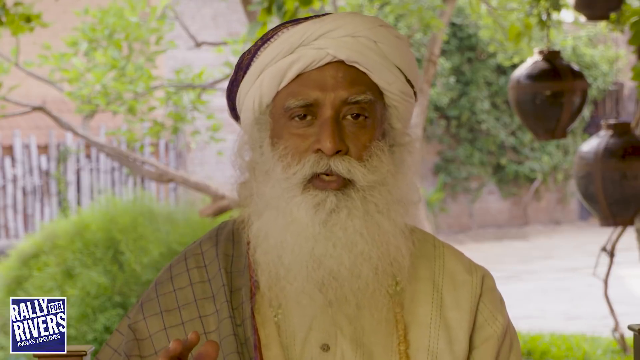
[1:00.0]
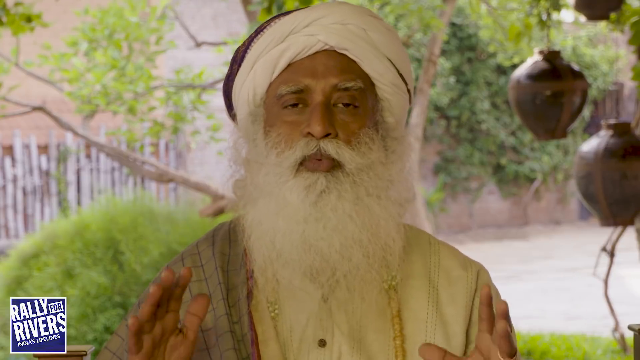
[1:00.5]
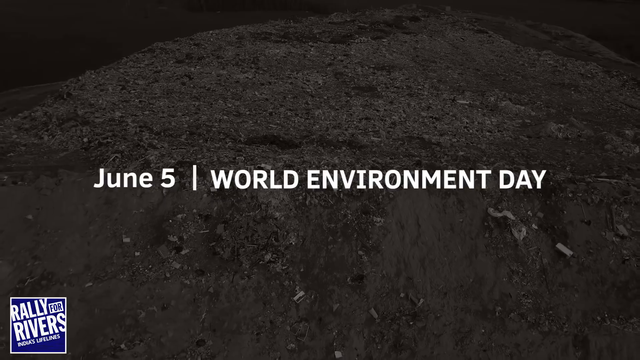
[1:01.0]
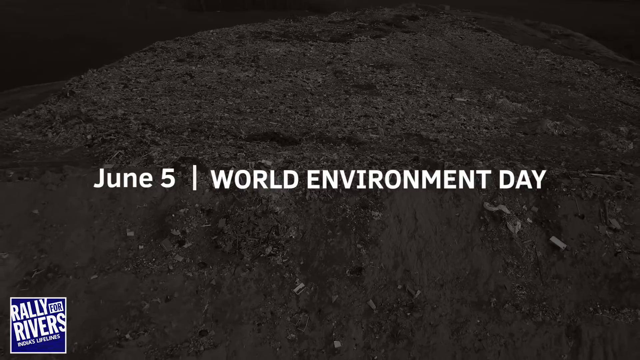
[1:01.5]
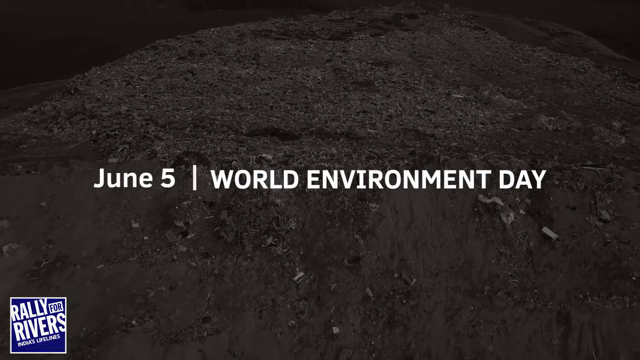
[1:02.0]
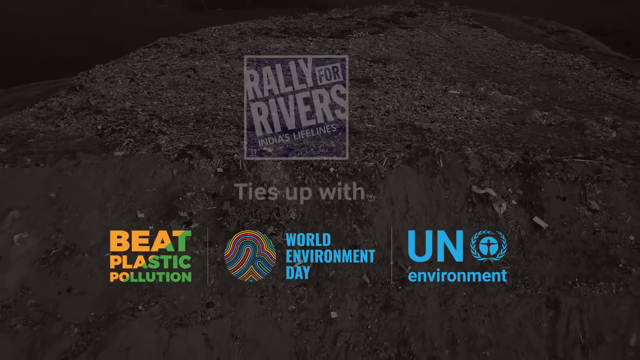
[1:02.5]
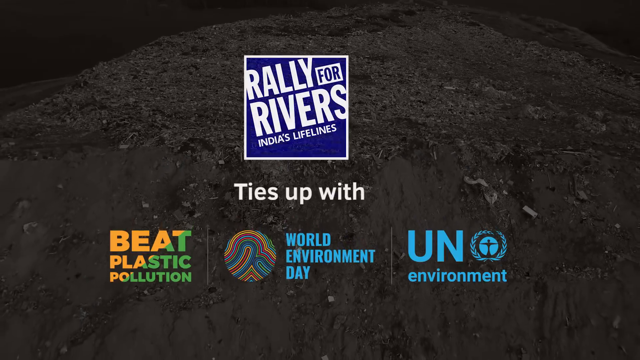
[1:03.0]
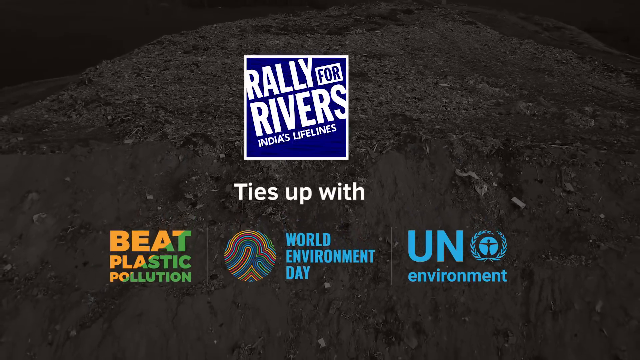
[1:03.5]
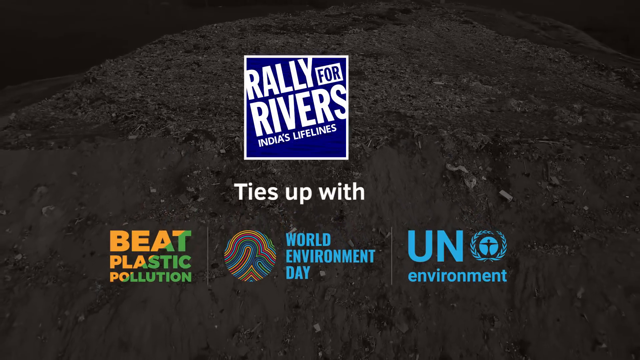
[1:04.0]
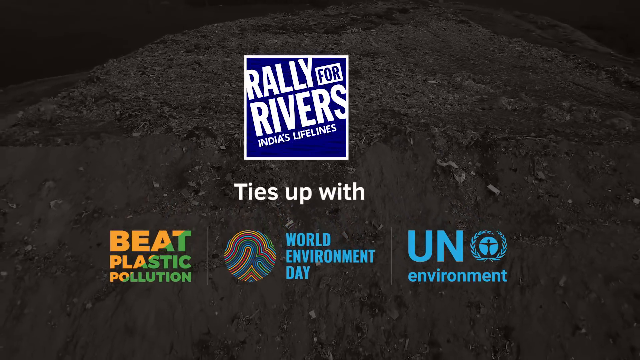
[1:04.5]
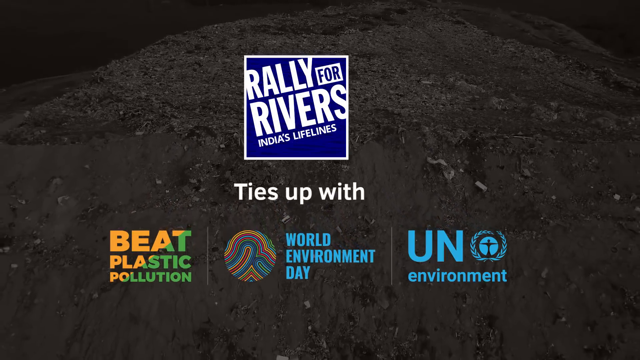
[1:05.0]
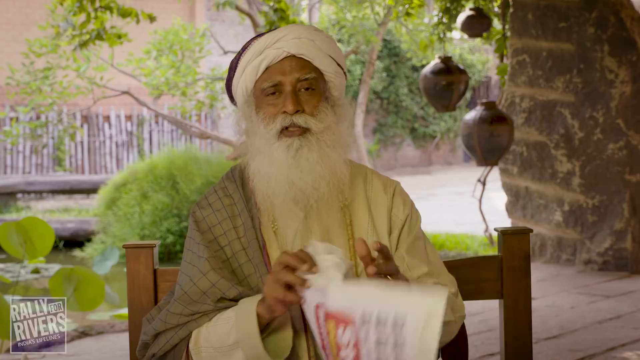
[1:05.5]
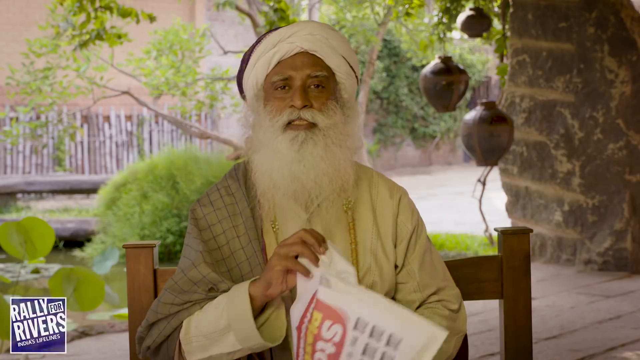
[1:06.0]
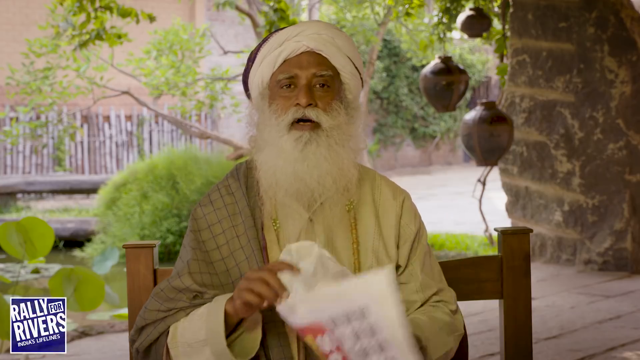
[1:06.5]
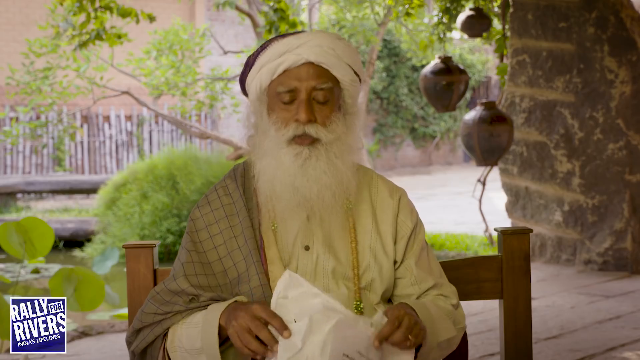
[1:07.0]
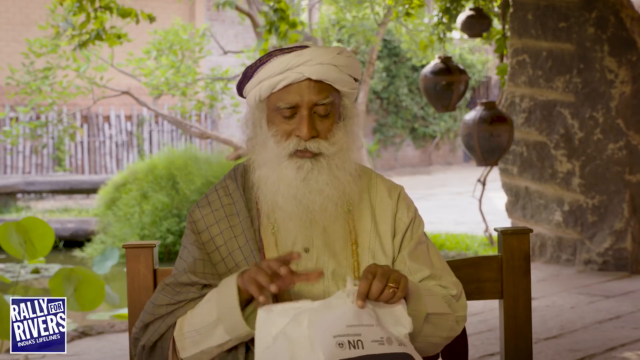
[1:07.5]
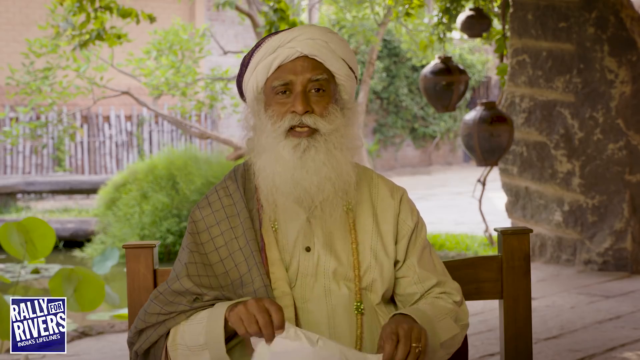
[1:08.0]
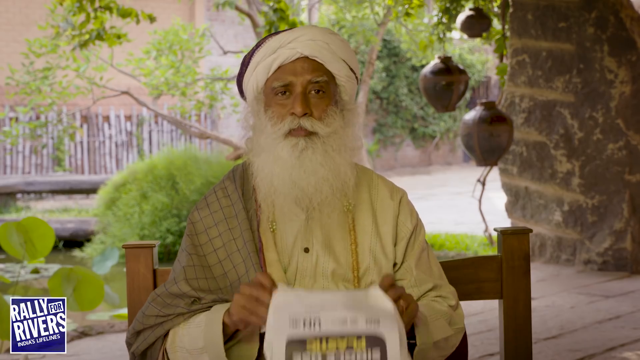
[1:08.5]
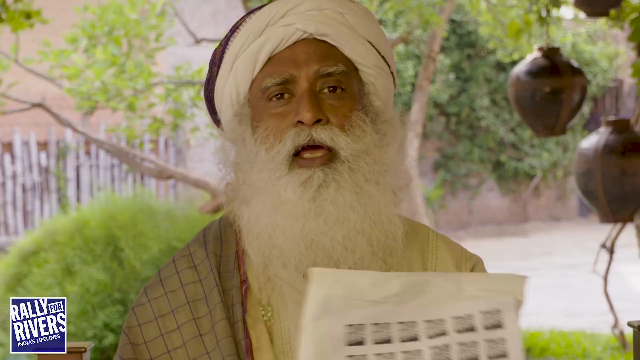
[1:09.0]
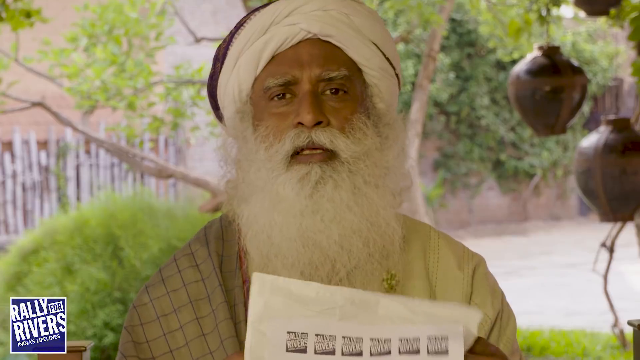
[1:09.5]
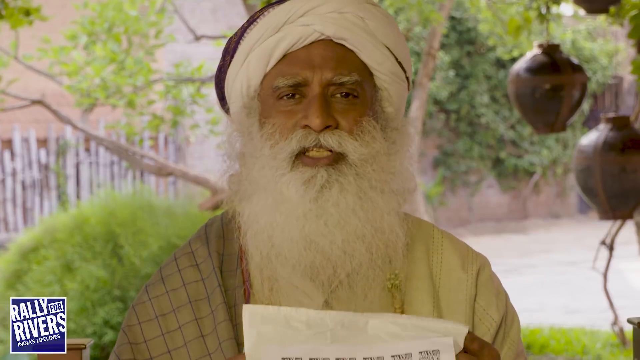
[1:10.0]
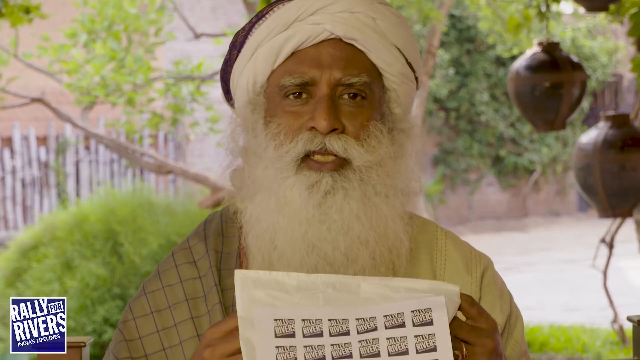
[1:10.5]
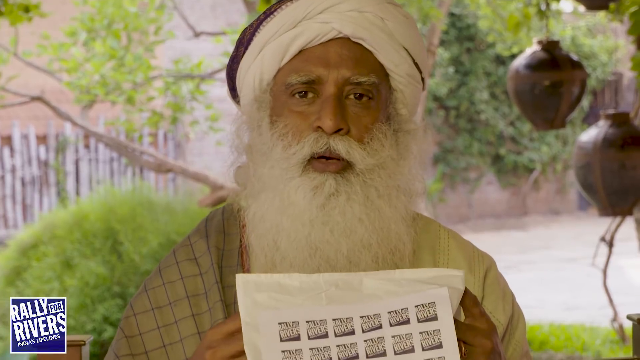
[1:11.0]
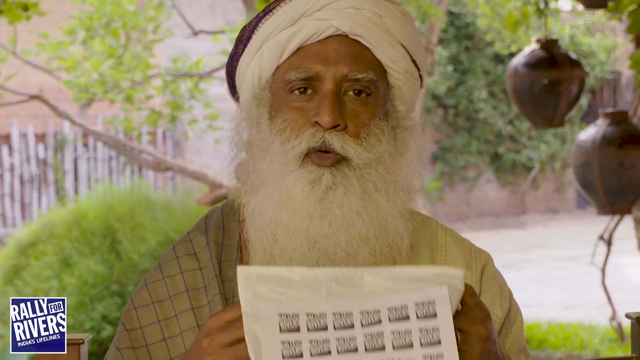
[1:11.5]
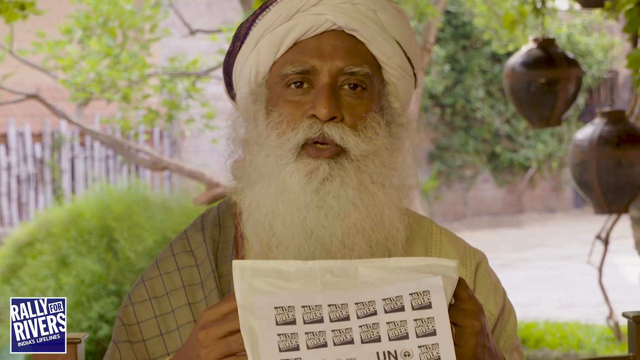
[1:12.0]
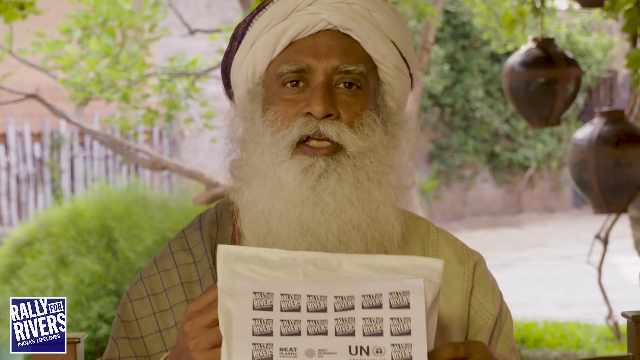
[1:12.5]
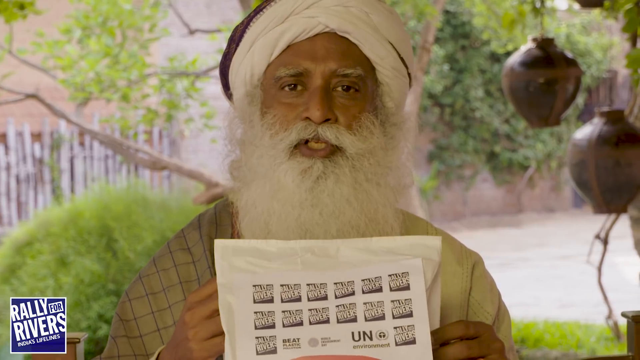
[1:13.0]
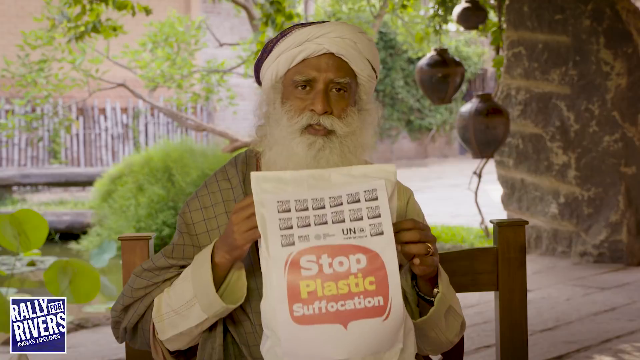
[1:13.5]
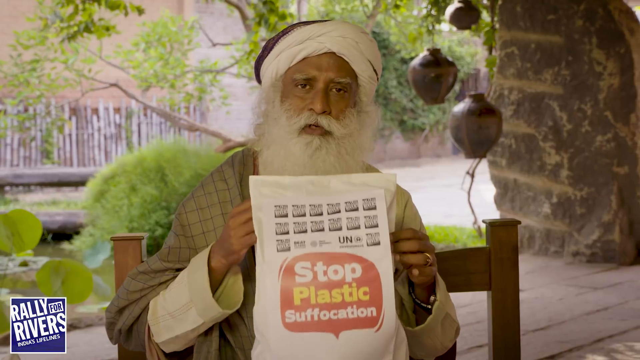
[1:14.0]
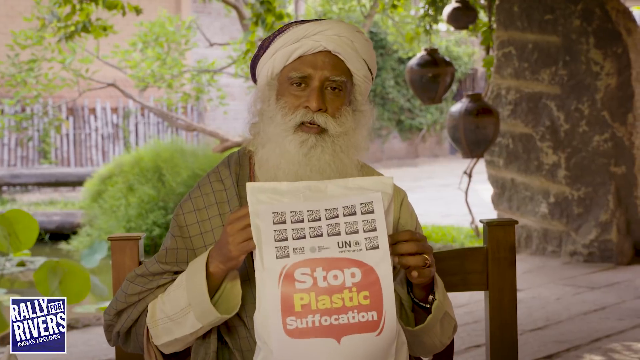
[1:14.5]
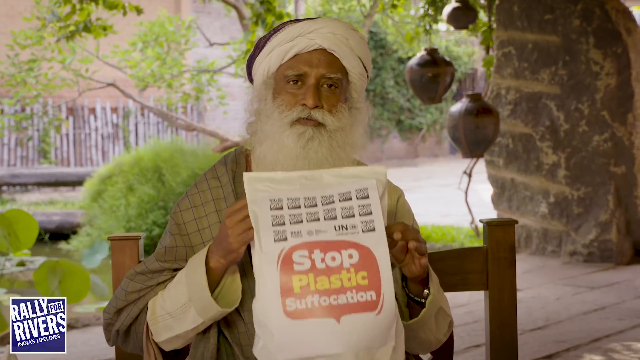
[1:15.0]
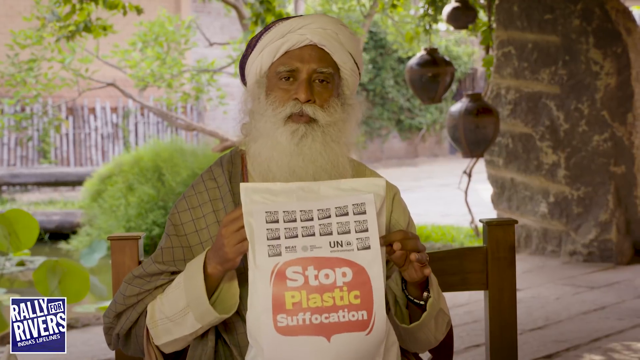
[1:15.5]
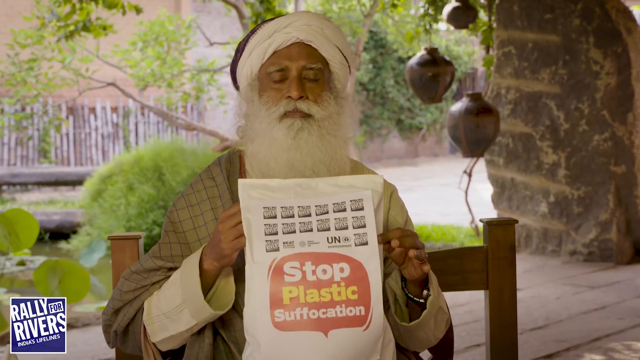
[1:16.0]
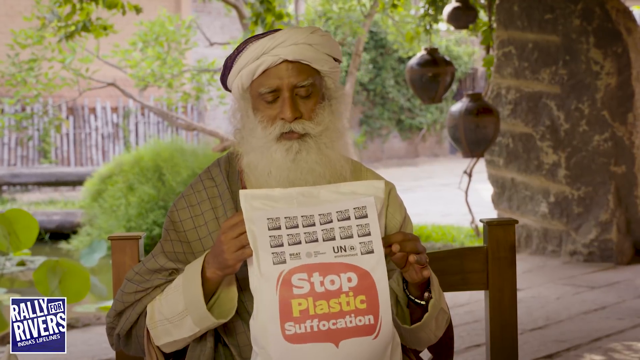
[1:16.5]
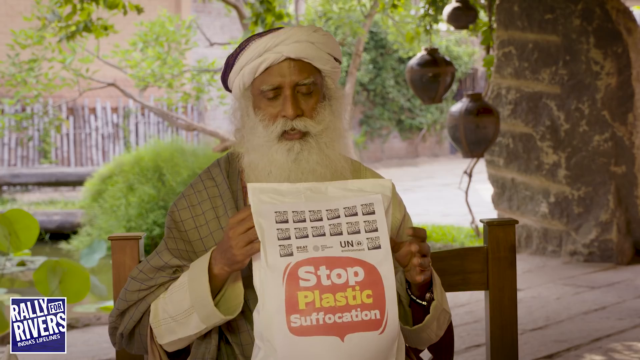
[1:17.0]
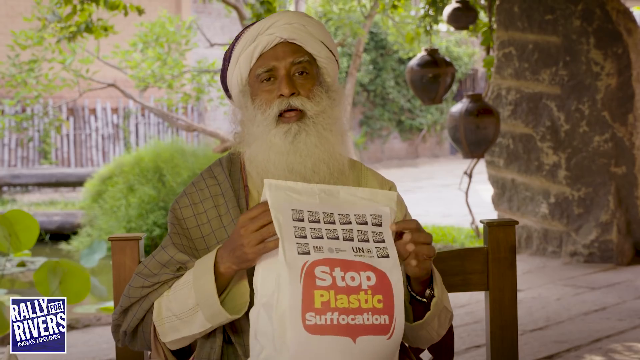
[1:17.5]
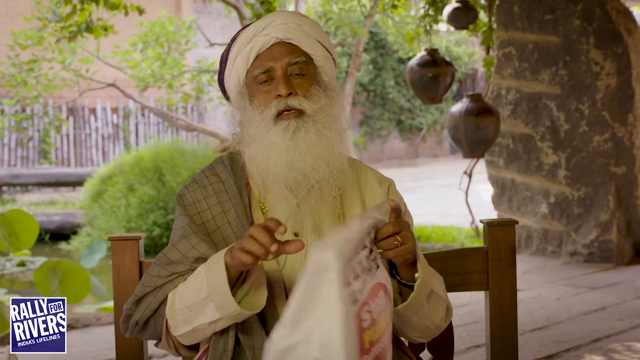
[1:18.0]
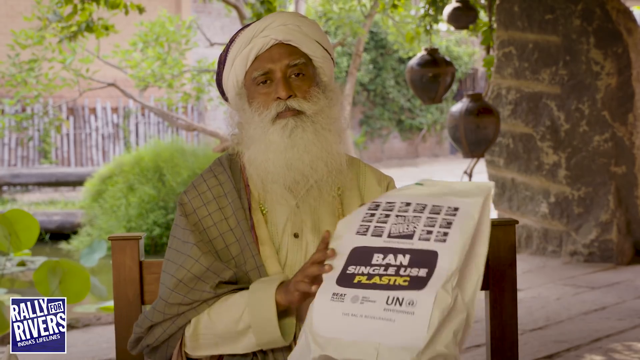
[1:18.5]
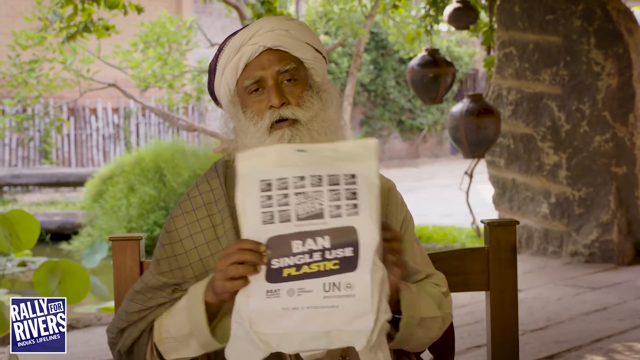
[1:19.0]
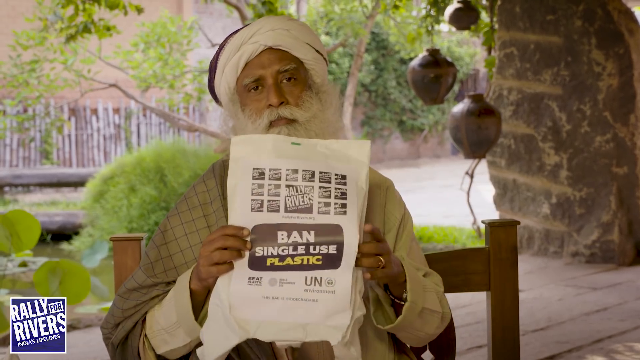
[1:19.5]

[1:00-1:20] The video from Rally for Rivers shows the Indian man holding a bag in his hand. The front of the bag has a red comment balloon that reads "stop plastic pollution," and the back of the bag reads "ban single use plastic." This is the same bag he wore over his head at the beginning of the video. A display shows where plastic goes after it is used: a body of water with a scuba diver, a lot of litter and plastic debris, and fish swimming.